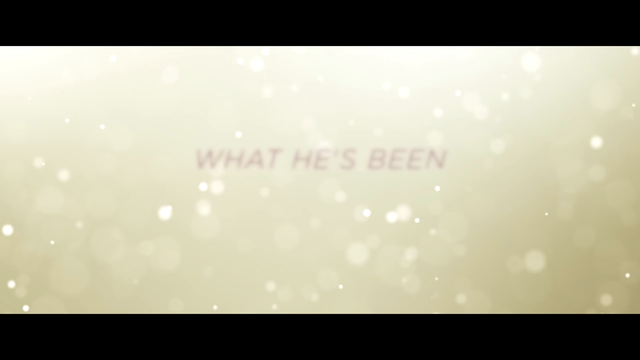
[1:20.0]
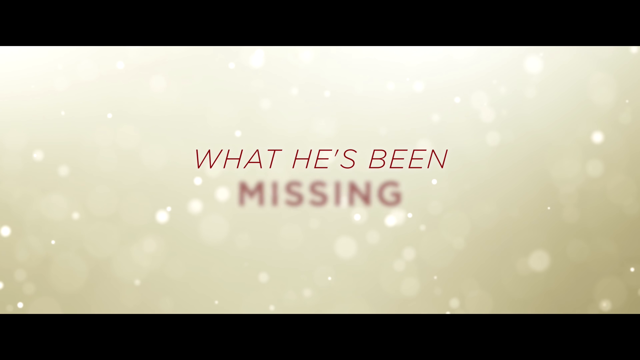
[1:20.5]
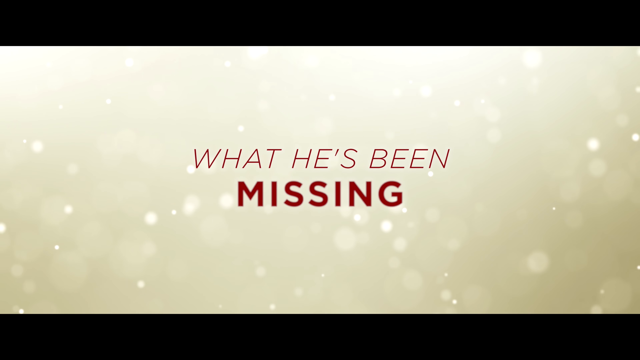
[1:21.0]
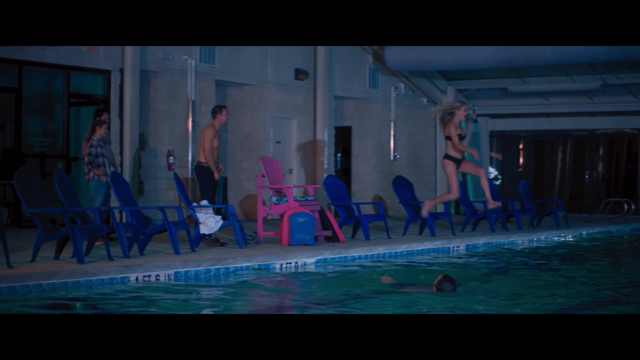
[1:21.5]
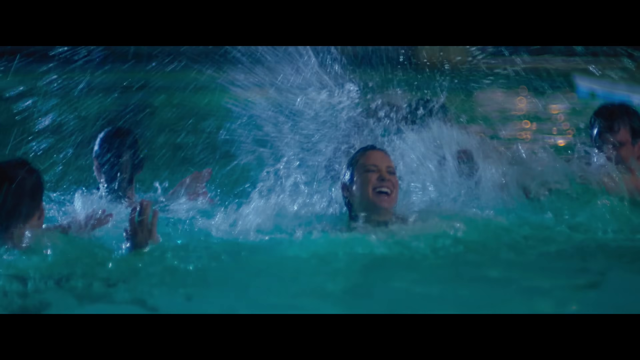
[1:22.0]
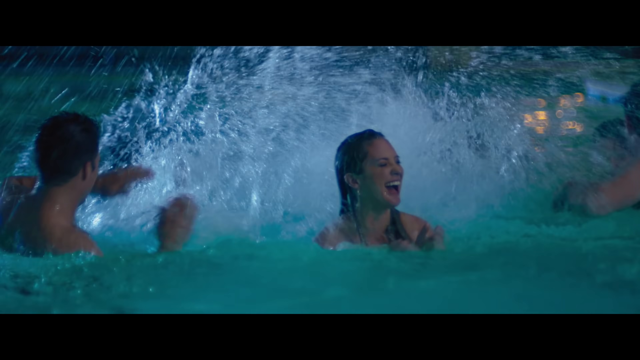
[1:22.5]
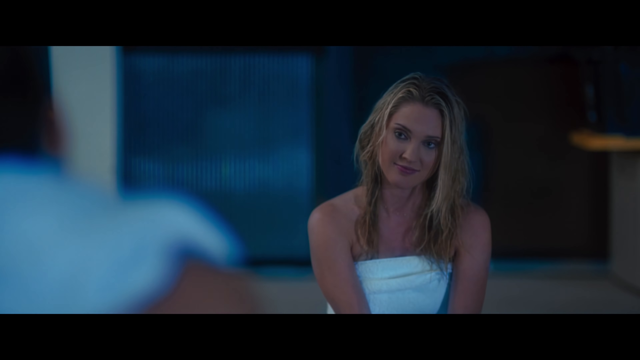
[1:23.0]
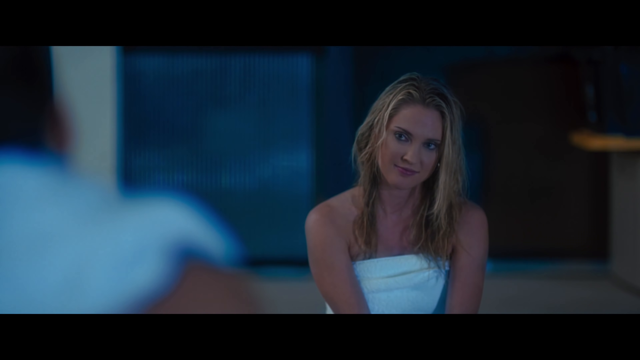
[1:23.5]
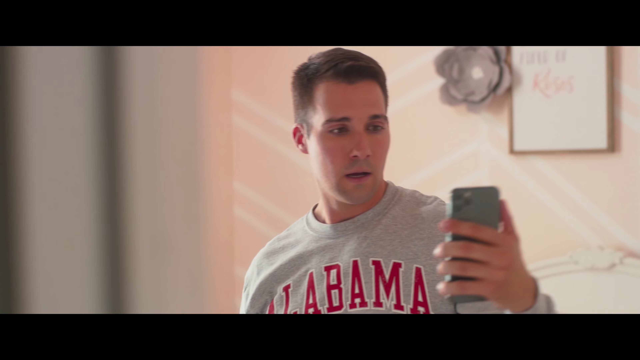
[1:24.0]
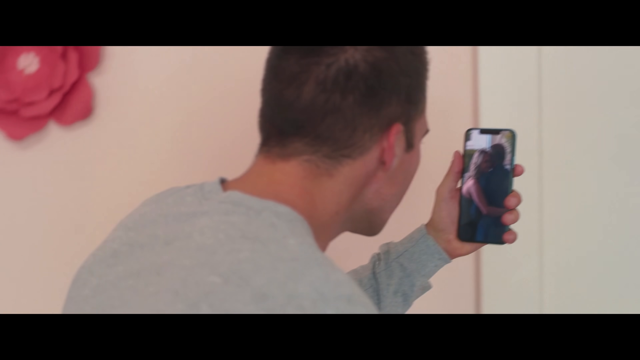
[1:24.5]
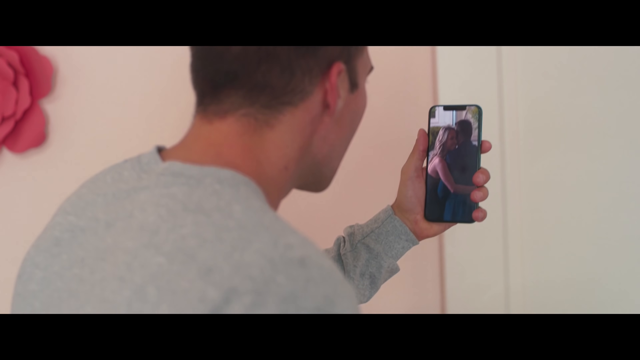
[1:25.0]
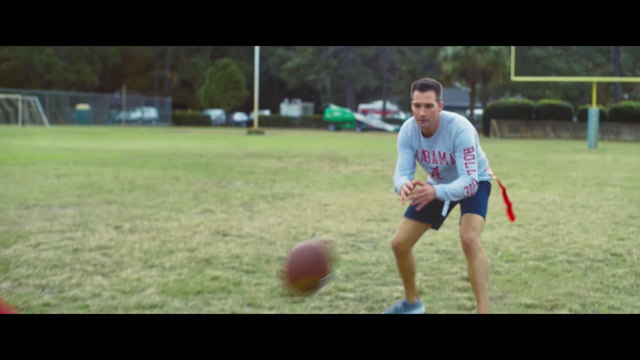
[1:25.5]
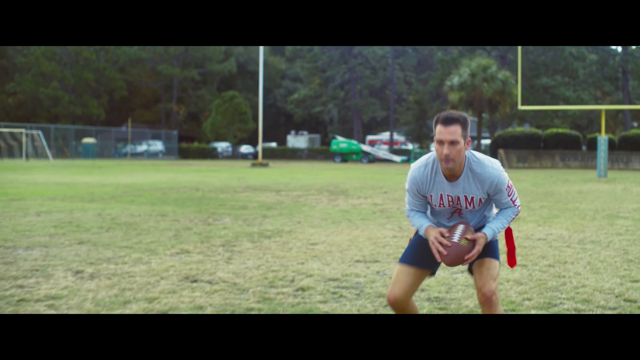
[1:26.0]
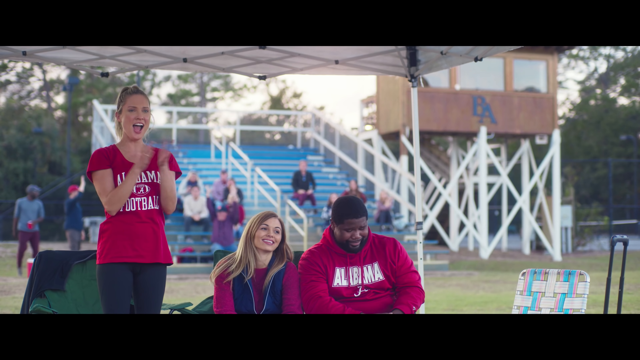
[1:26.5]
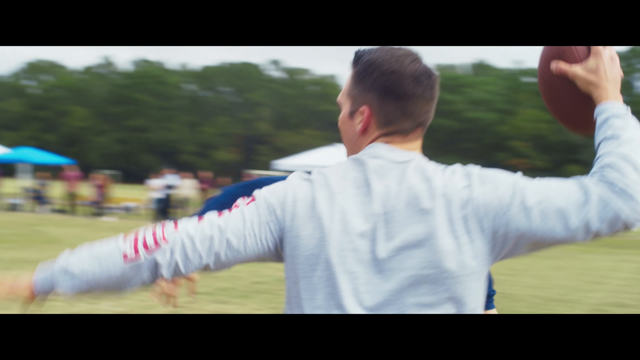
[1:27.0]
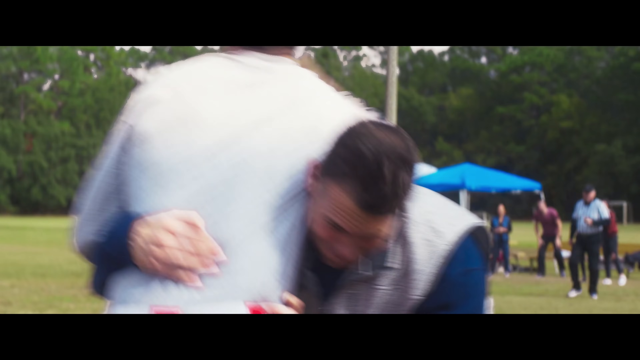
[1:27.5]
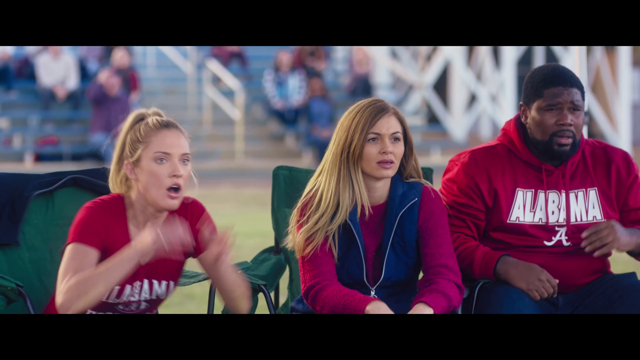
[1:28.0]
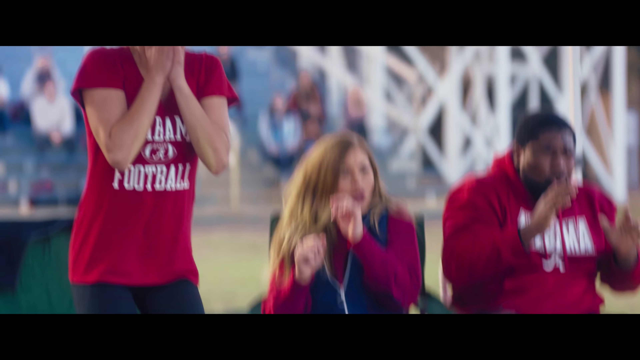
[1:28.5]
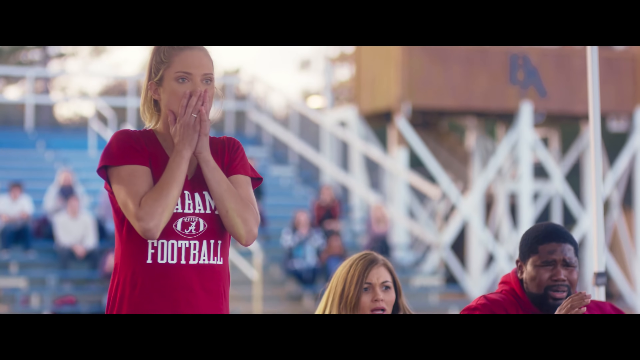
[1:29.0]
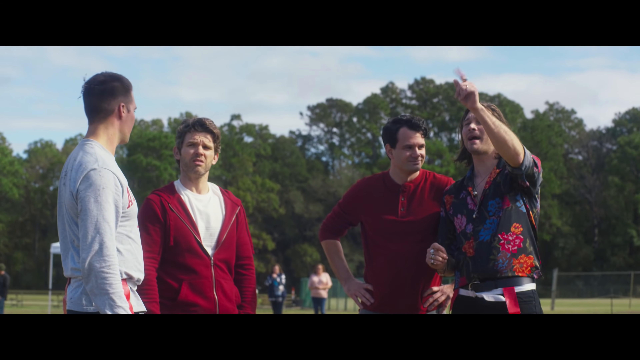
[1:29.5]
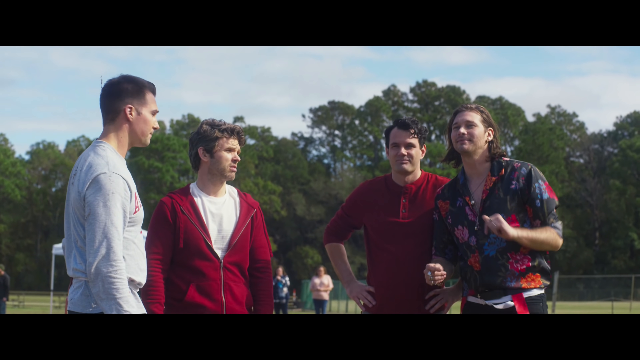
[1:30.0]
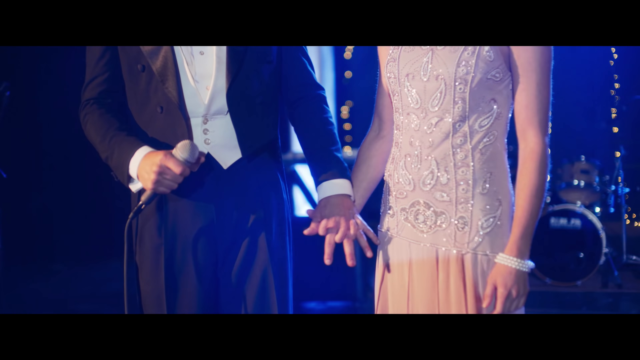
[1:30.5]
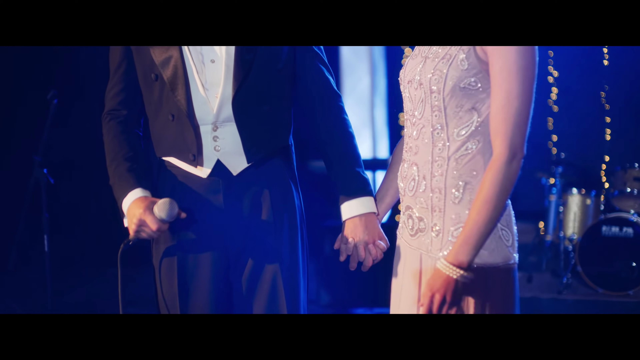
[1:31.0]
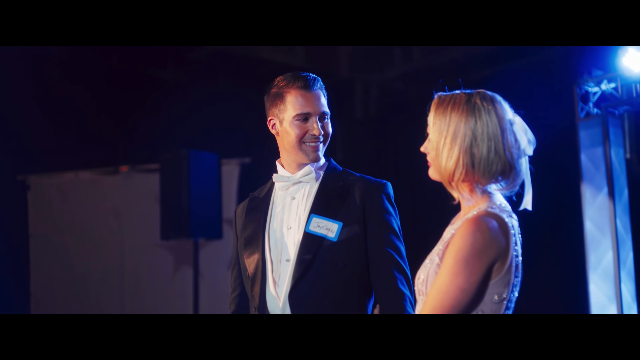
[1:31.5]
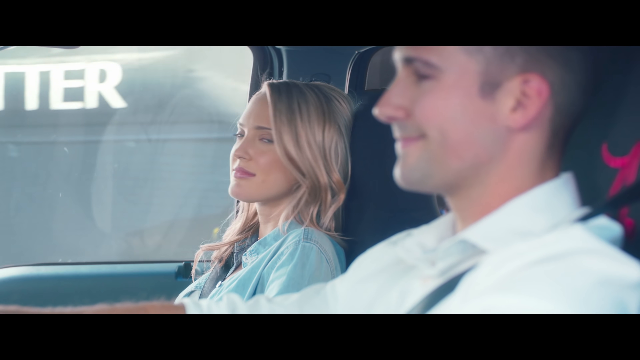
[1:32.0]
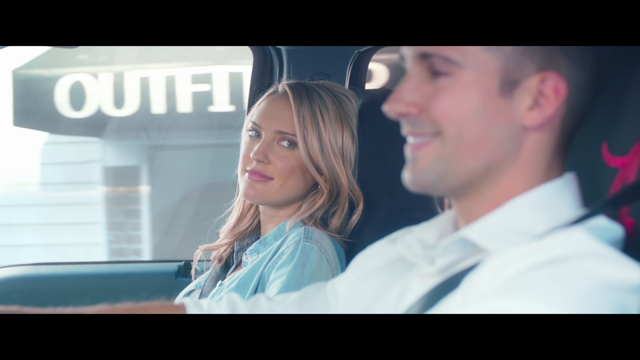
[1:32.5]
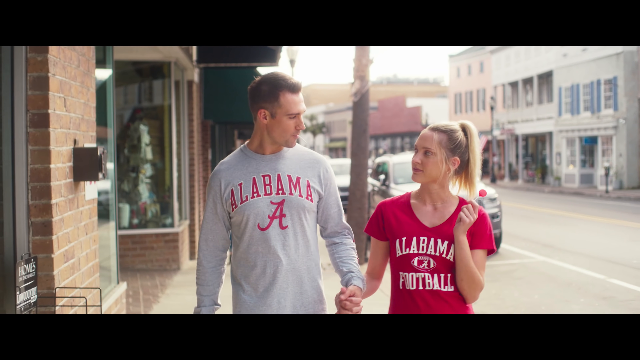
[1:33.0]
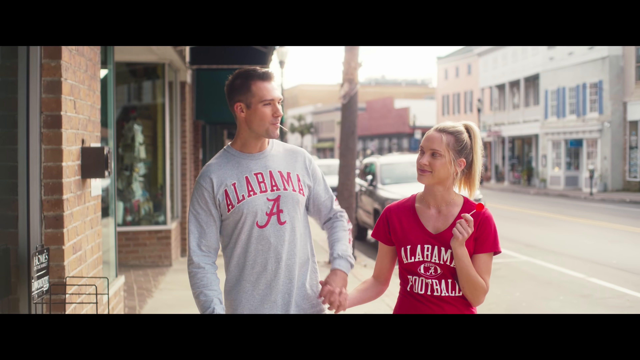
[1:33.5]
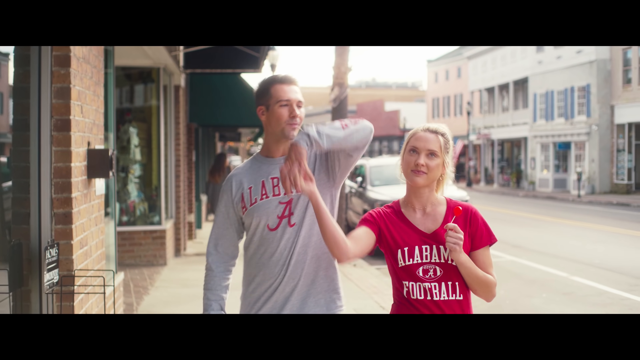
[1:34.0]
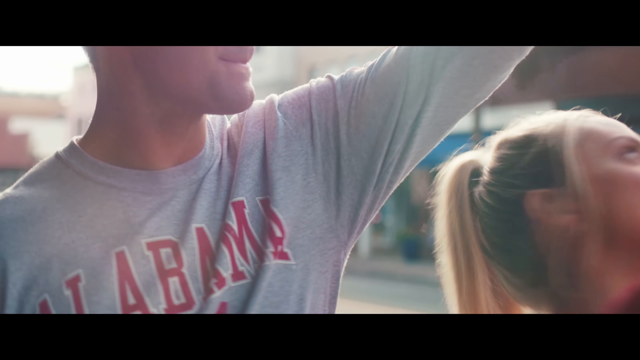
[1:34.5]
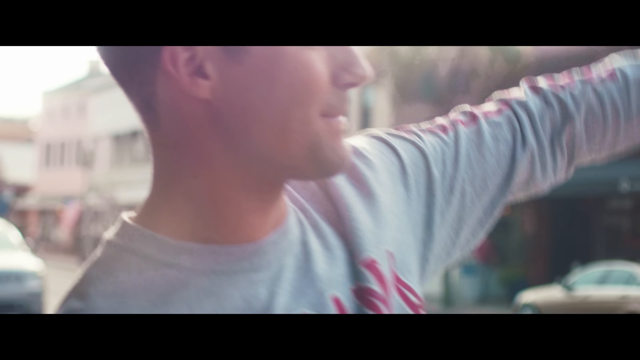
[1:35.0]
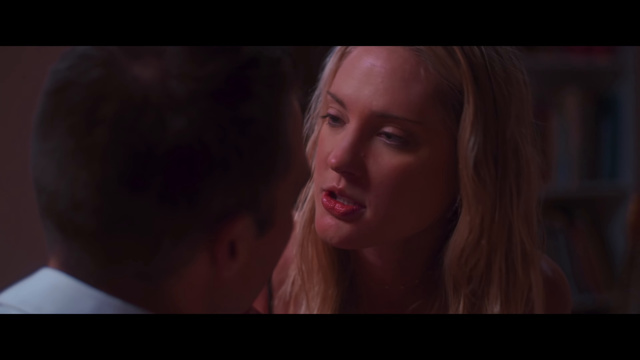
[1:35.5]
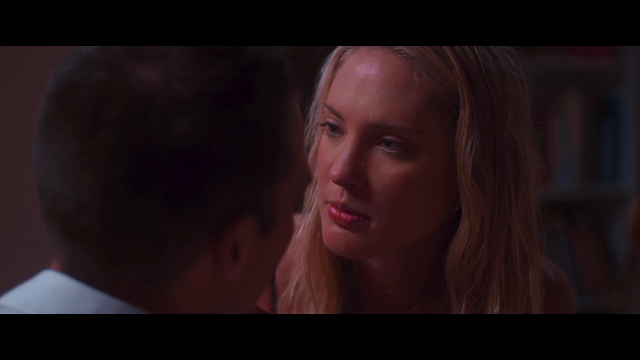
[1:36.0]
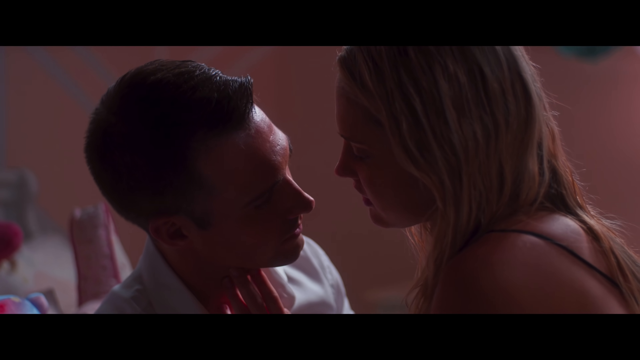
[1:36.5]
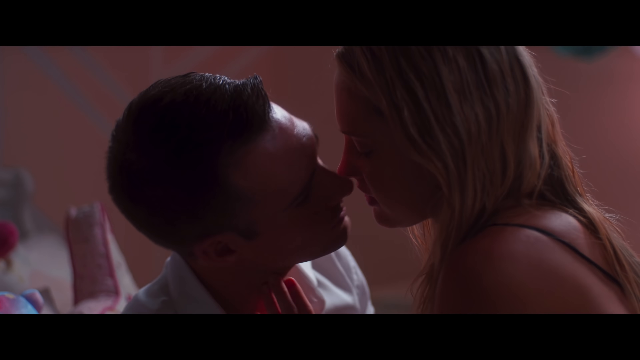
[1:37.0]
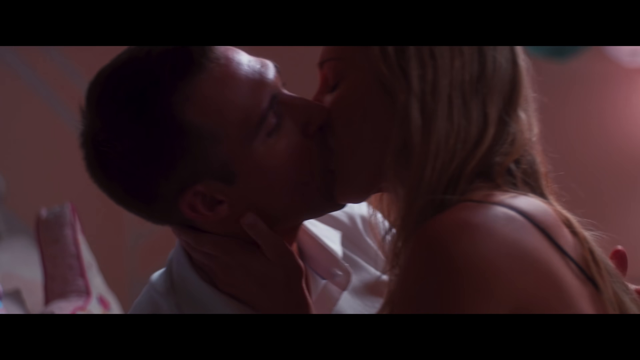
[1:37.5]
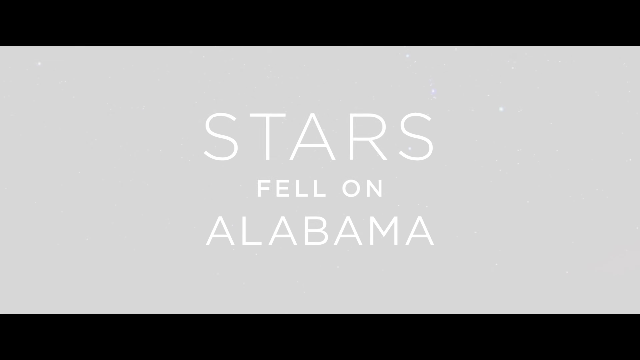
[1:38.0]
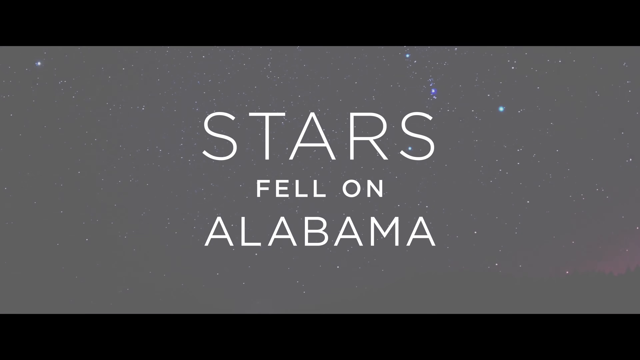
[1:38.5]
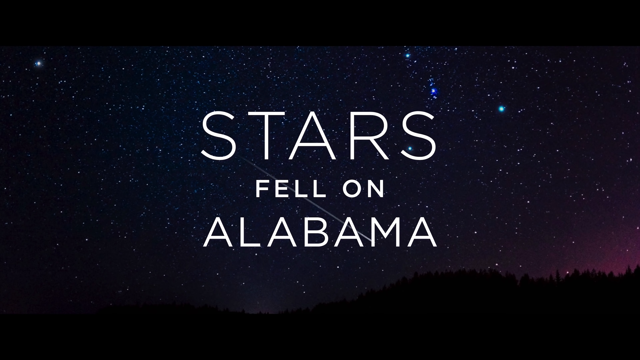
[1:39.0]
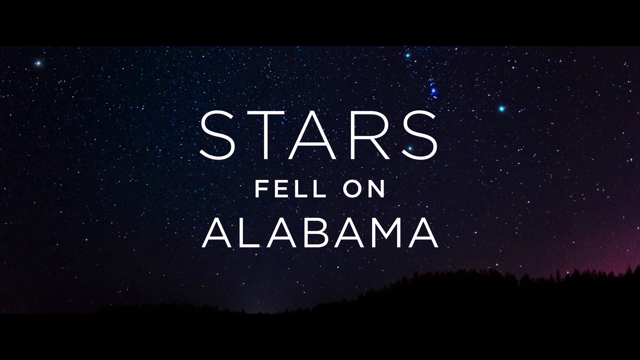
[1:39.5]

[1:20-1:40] A woman jumps into a pool and people swim happily. Another man receives a video call showing a couple kissing, and a woman is possibly finding out. People play rugby and then fight, and a woman seems to be getting hurt. A couple stares at each other, and one man apparently plays Alabama football. The couple kisses.